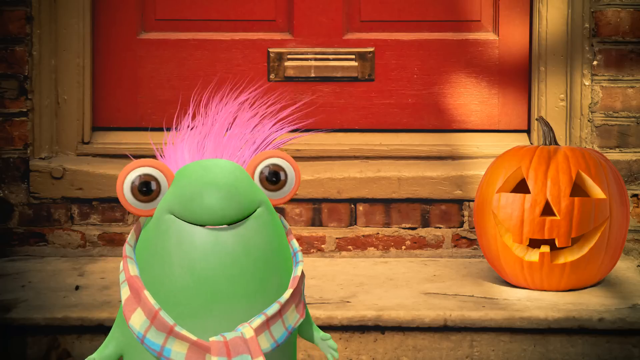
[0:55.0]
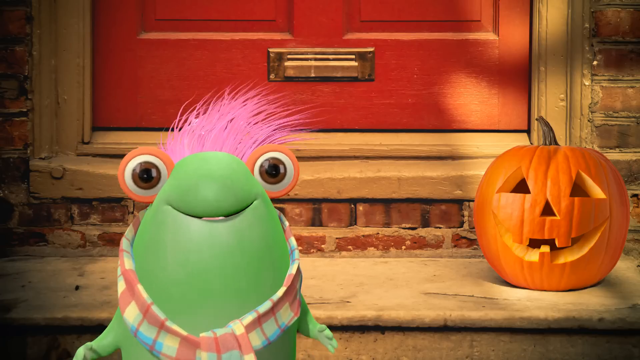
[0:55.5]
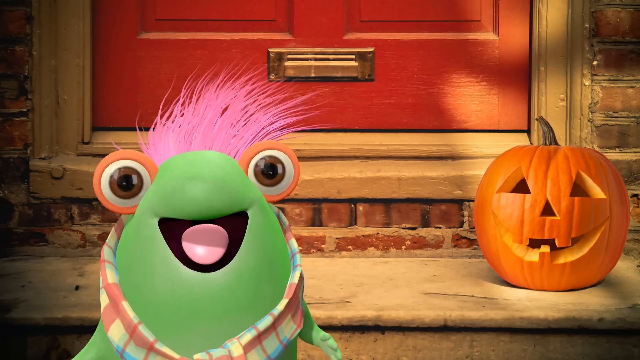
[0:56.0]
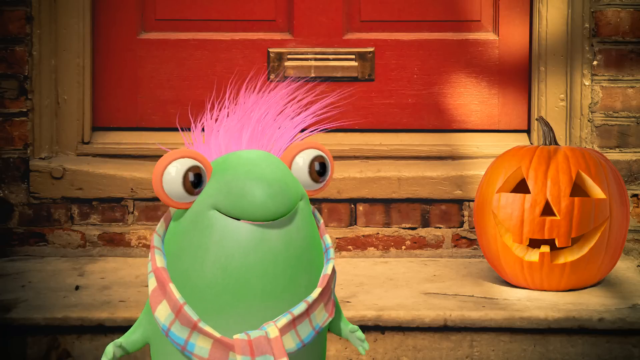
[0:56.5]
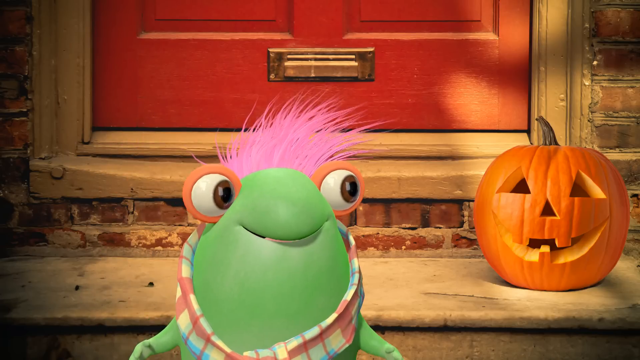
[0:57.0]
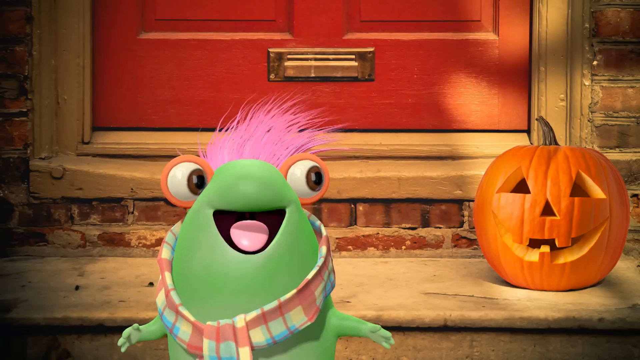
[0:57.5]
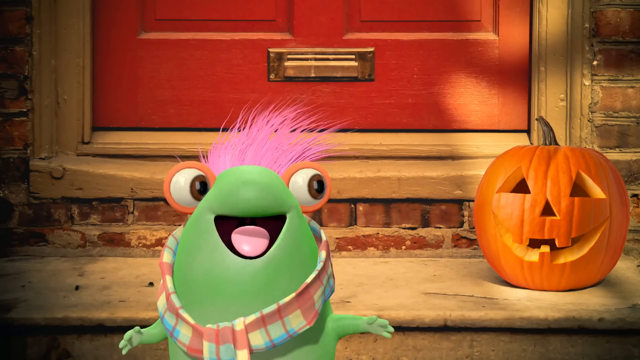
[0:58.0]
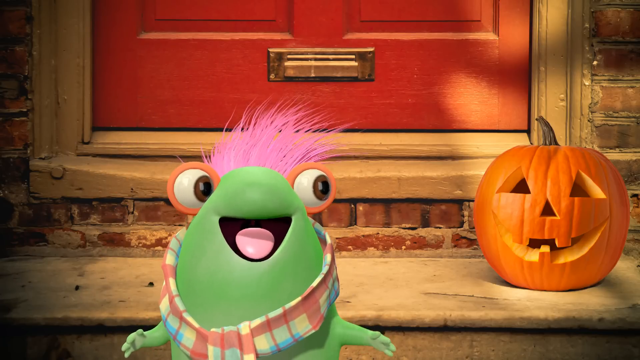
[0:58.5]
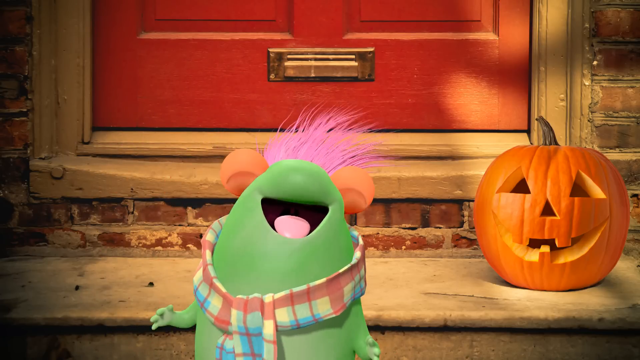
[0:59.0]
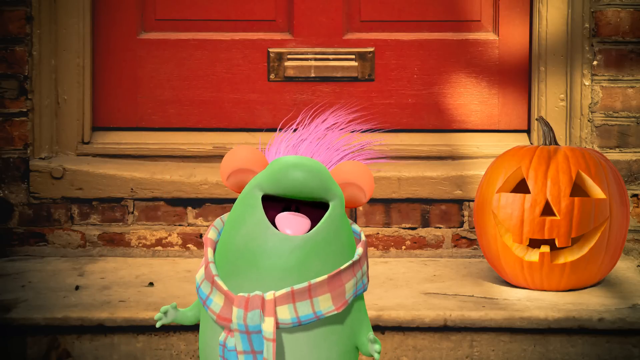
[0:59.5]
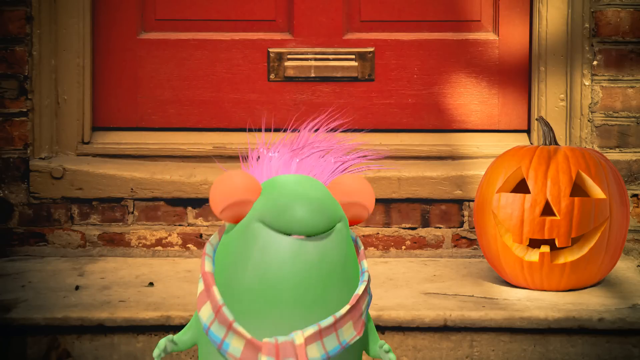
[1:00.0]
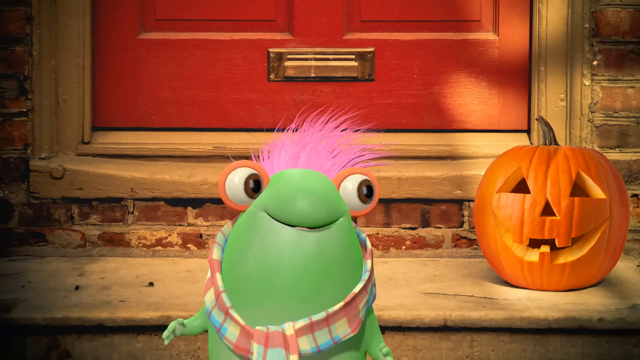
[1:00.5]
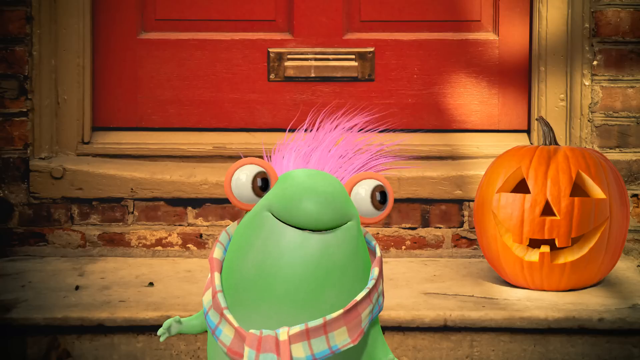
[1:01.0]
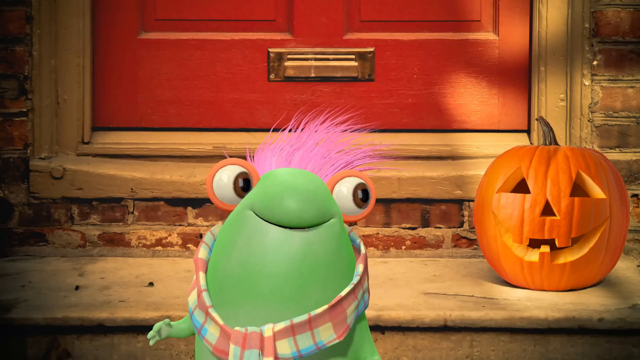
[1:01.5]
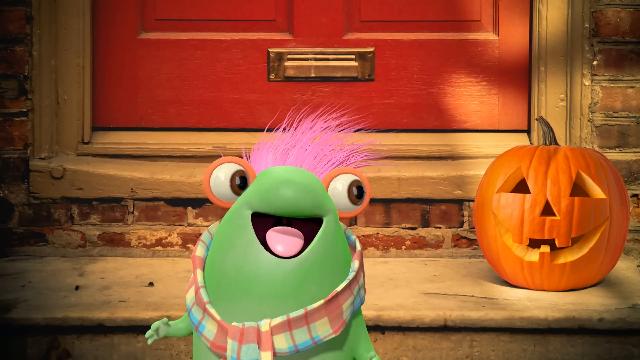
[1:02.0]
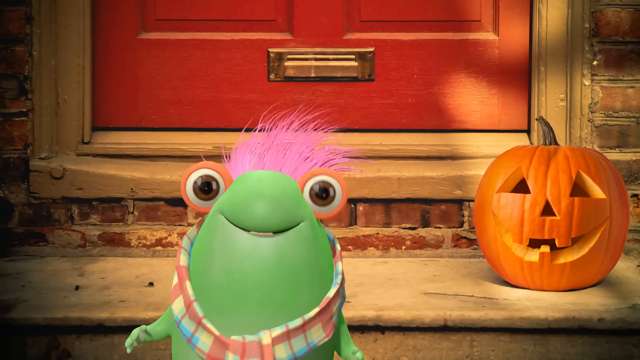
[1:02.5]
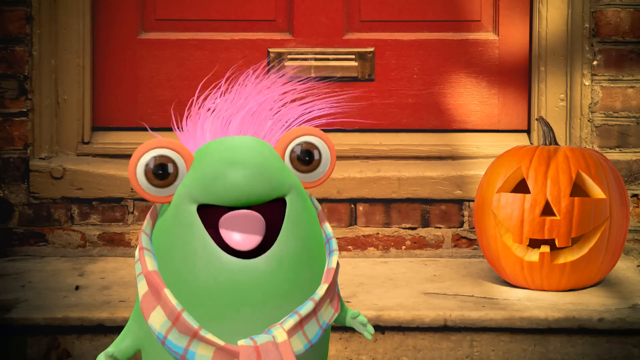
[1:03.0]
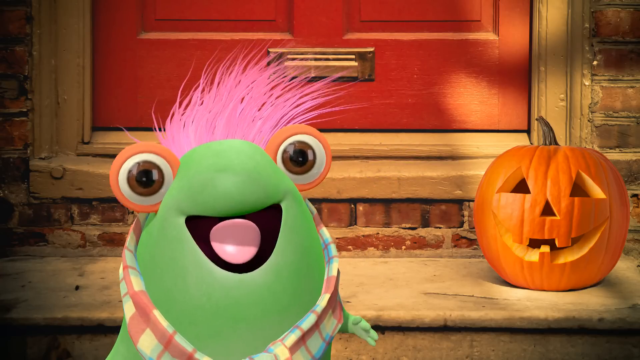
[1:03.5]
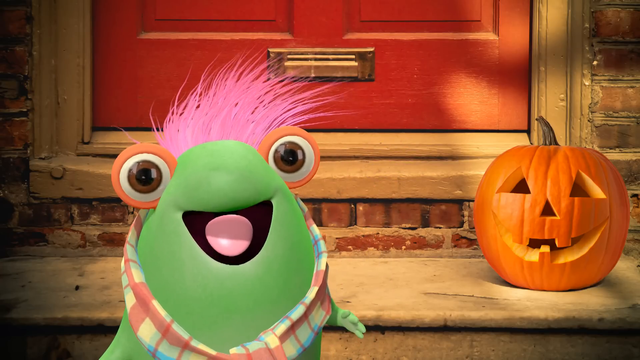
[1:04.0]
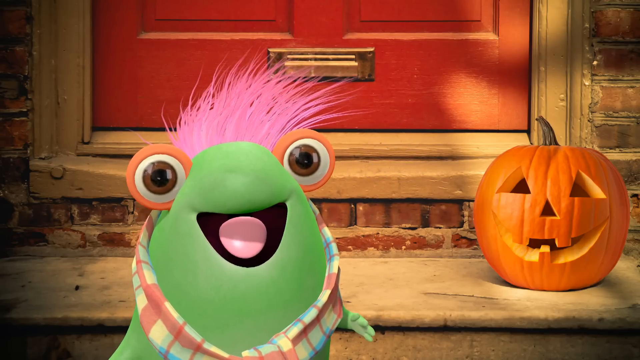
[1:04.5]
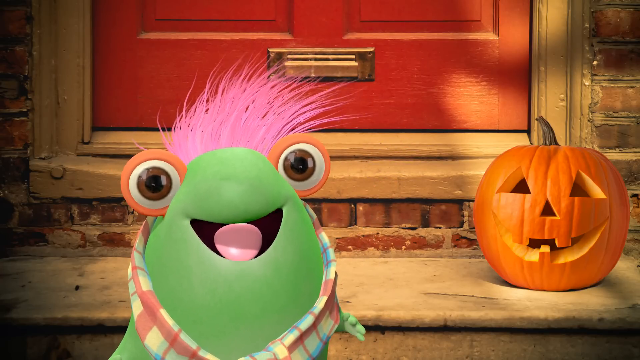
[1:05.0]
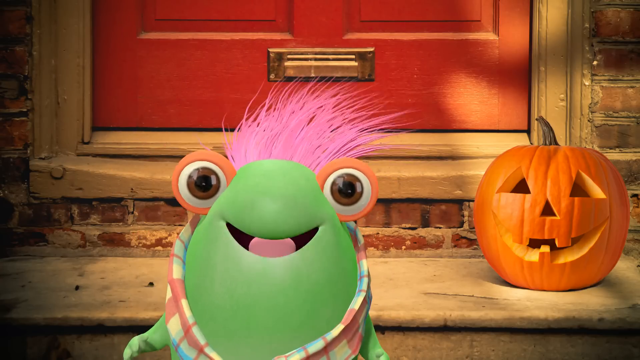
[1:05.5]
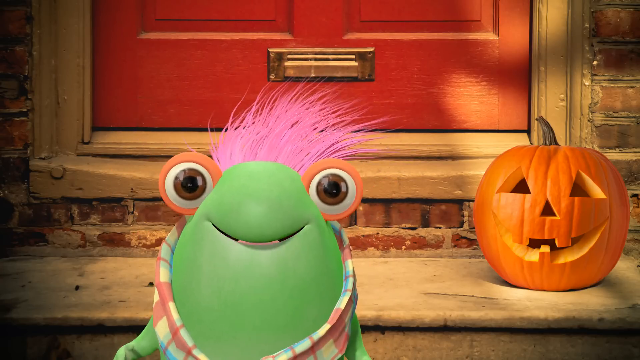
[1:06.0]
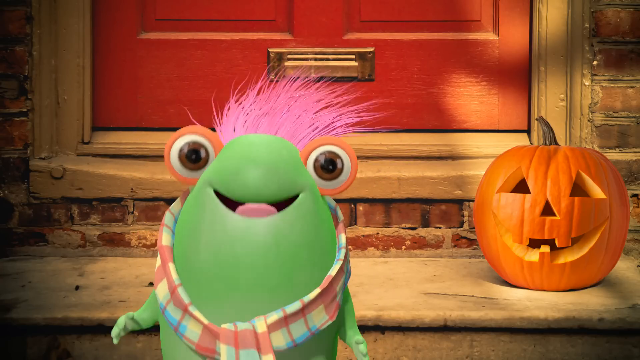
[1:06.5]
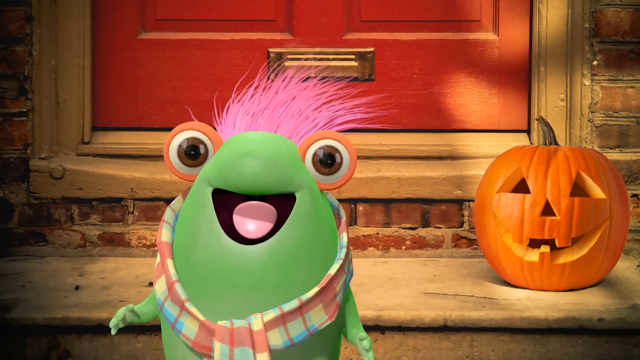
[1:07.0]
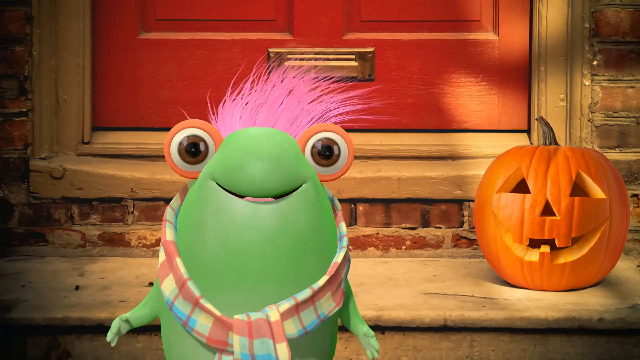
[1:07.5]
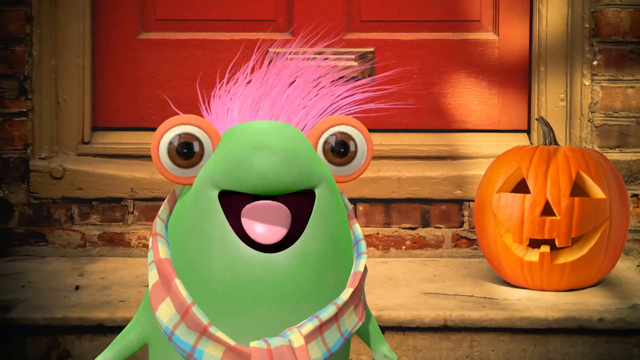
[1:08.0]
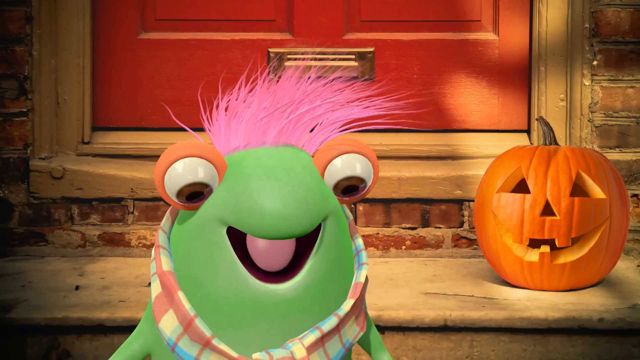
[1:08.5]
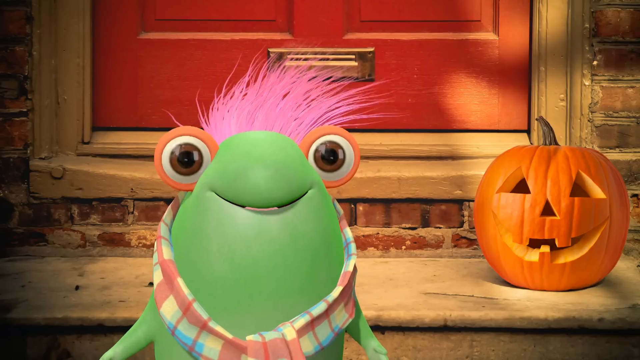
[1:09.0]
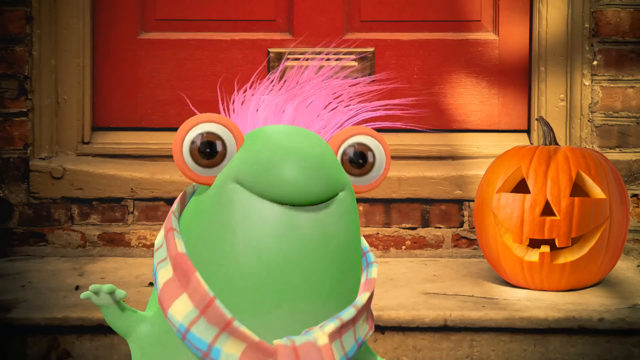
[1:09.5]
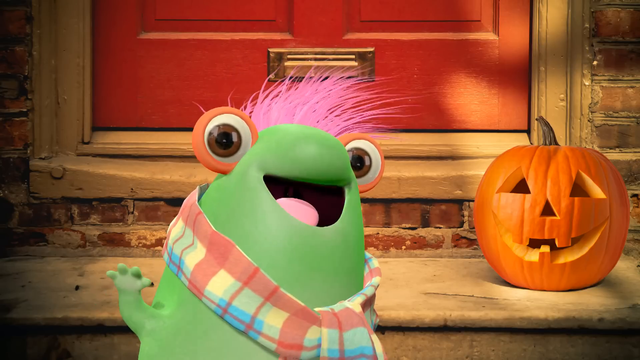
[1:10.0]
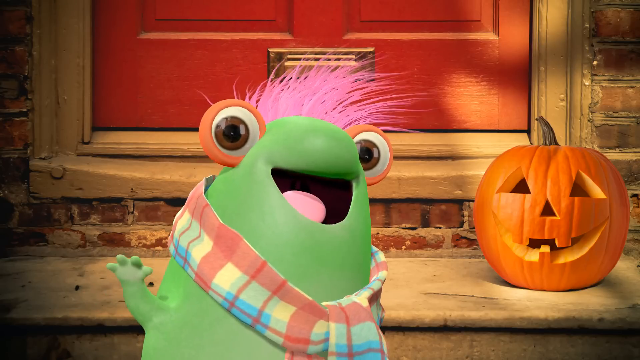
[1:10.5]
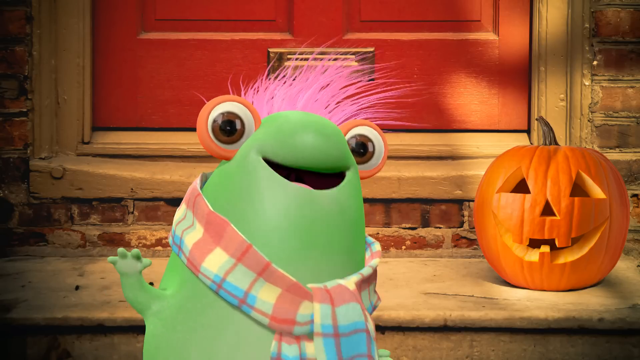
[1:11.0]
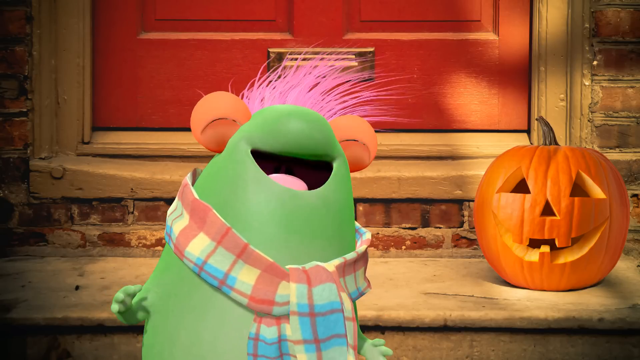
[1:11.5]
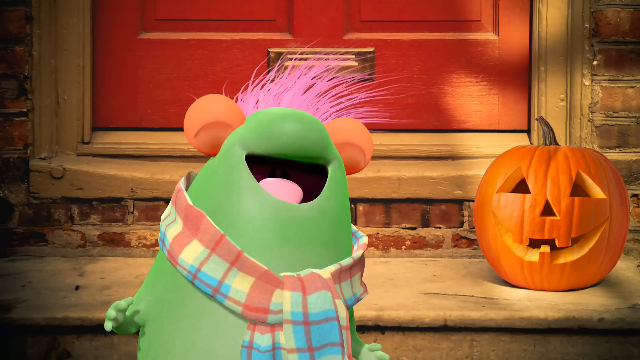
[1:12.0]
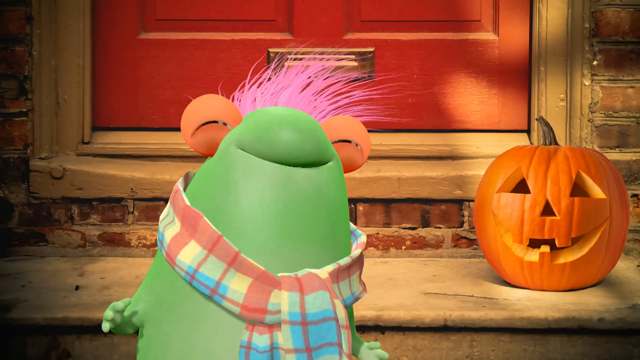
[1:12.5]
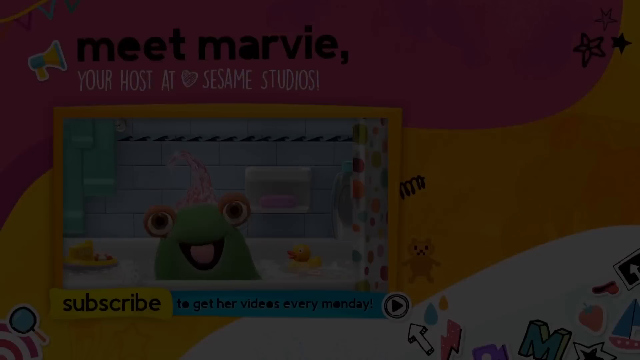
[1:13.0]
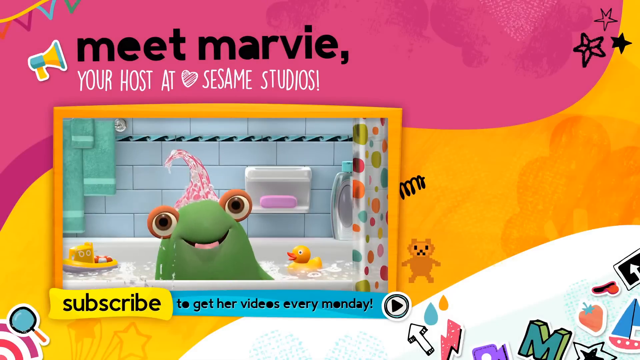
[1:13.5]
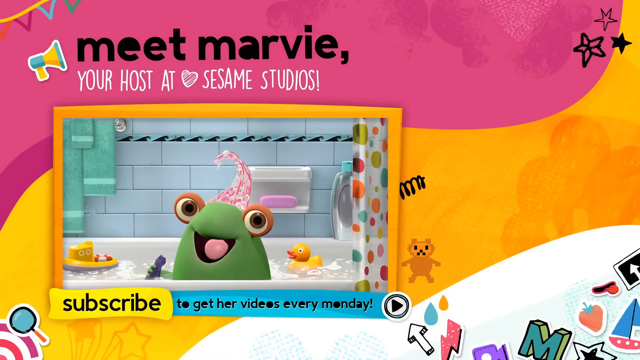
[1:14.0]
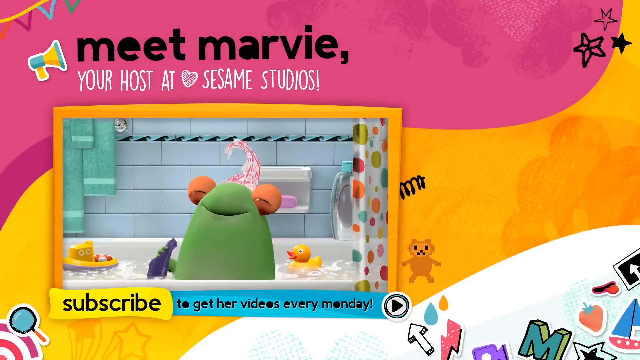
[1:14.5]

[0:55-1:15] The green character with pink fluffy hair and orange and brown rimmed eyes is still in the scene with the pumpkin and the red door with a letter box. The building is made of a reddish brick material, and the pumpkin is sitting on what looks to be a step to the door. The character looks toward his left at something off camera and keeps talking, then blinks tightly, opens his eyes, and blinks very tightly again. Still talking a lot, he looks back at the camera with his mouth open in enthusiasm and stays in that position. He looks down toward the ground and back up, then puts his hand up at the camera and waves slightly as if saying goodbye while continuing to talk. He tightly closes his orange eyes again and opens them very gently. Black text on the screen reads "meet Marvie," with white text reading "you're host at Sesame Studios." A yellow banner has black text reading "subscribe," and a blue banner has black text reading "to get her videos every Monday." The background is yellow, orange and white with small designs, apparently including a bear and some stickers. The video then shows the character sitting in a bathtub in water with some yellow rubber duckies; he looks like he is singing and bouncing around.